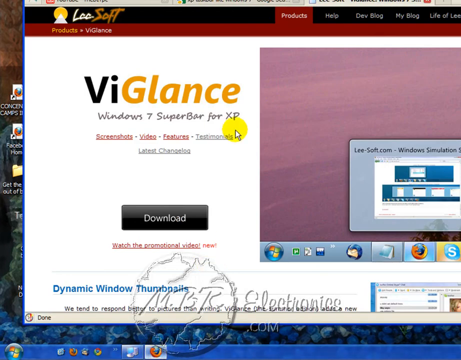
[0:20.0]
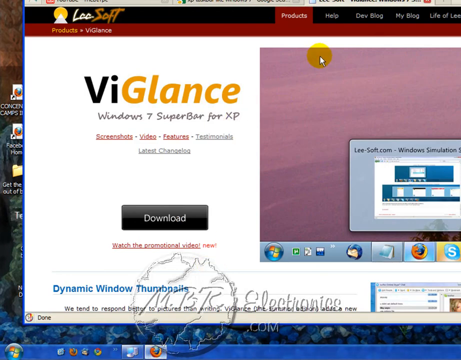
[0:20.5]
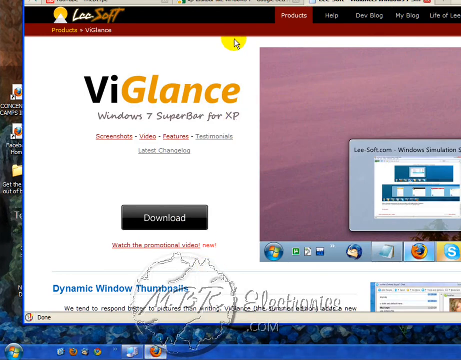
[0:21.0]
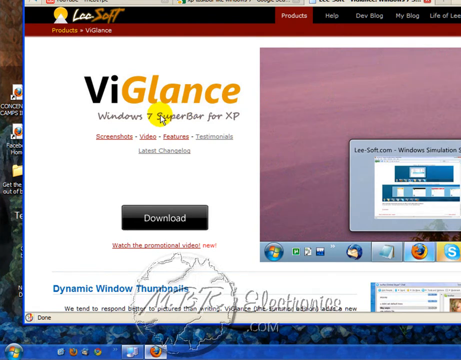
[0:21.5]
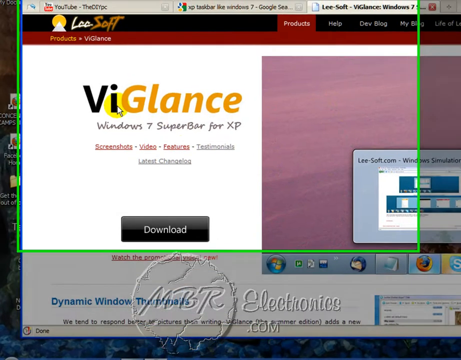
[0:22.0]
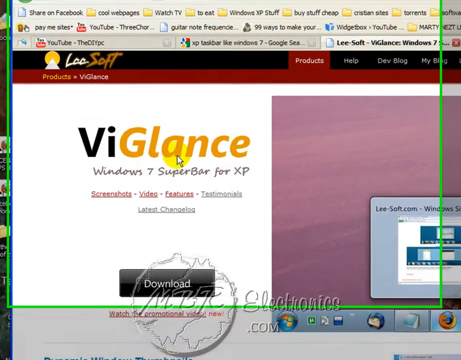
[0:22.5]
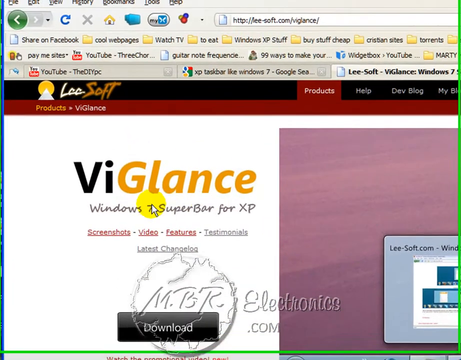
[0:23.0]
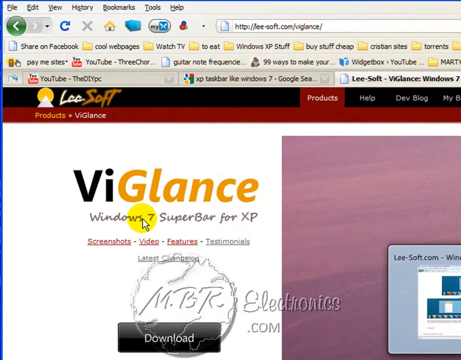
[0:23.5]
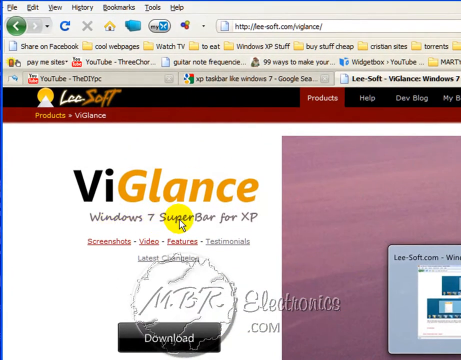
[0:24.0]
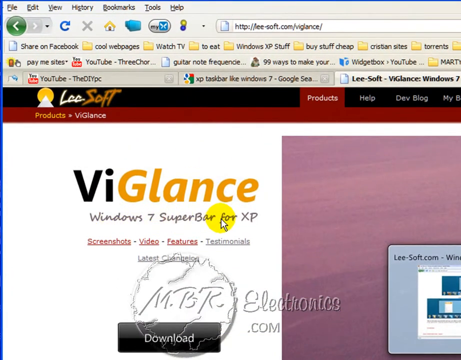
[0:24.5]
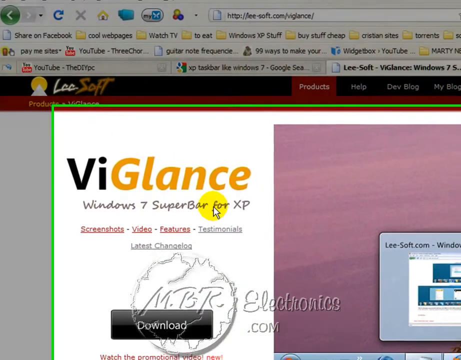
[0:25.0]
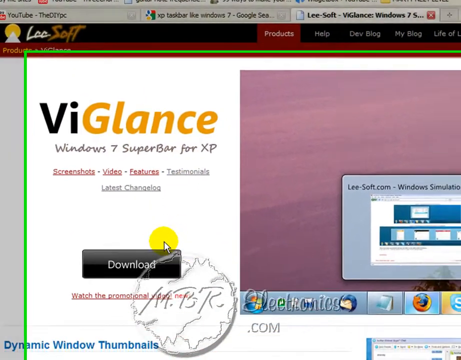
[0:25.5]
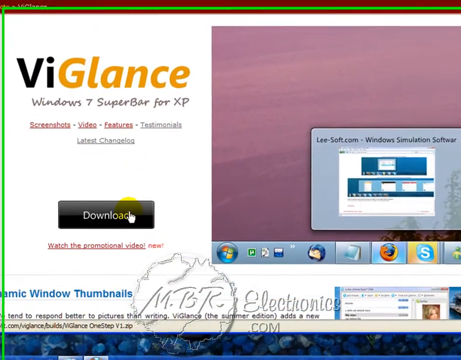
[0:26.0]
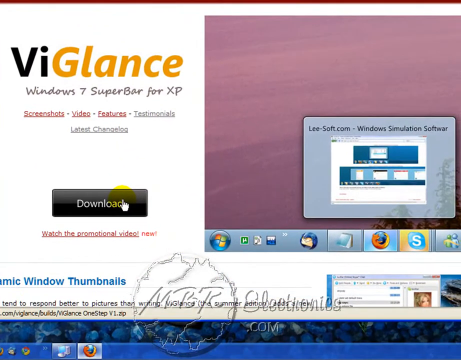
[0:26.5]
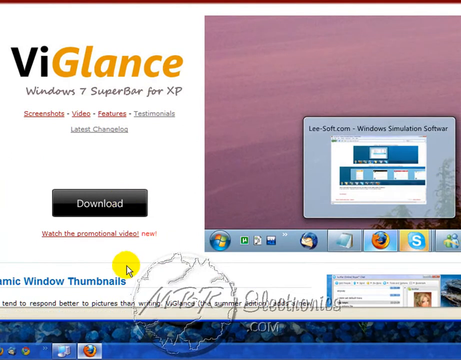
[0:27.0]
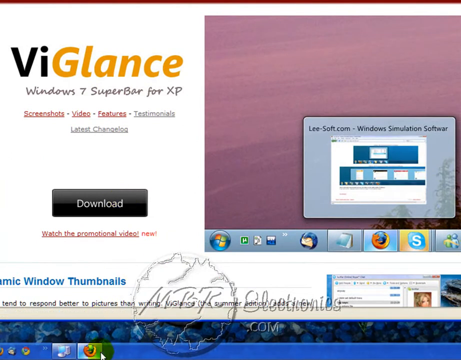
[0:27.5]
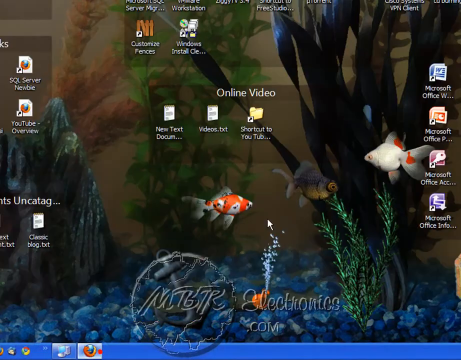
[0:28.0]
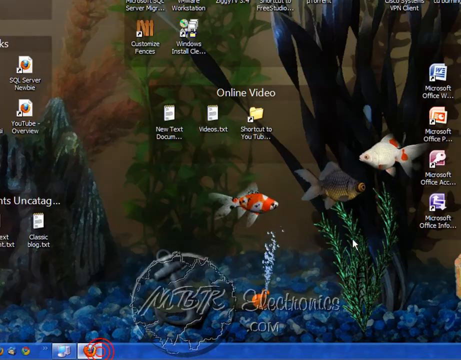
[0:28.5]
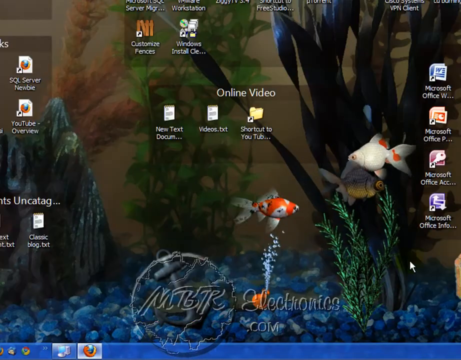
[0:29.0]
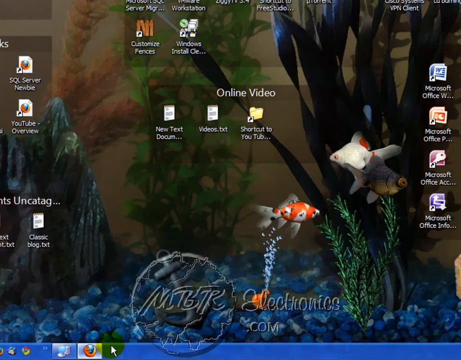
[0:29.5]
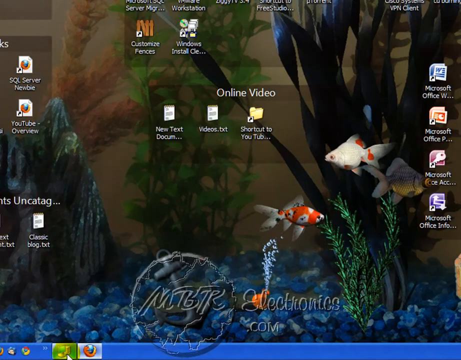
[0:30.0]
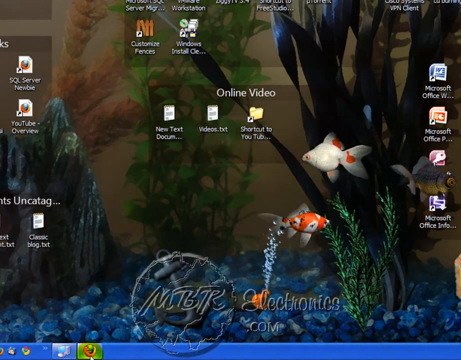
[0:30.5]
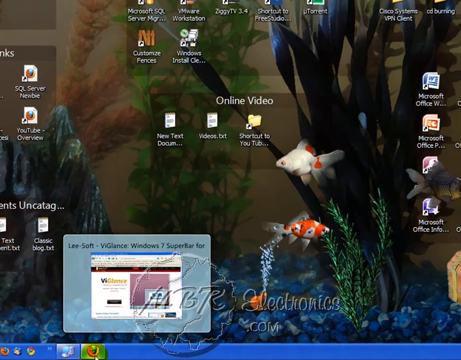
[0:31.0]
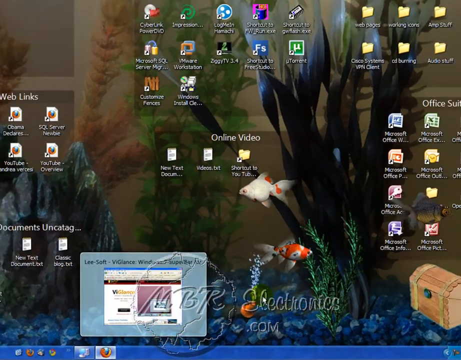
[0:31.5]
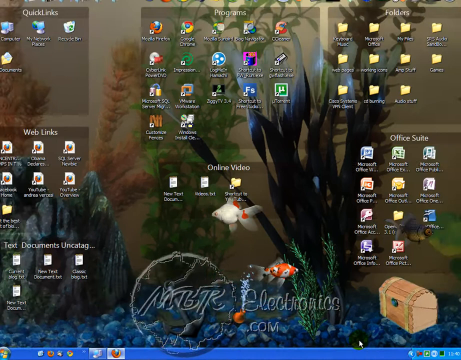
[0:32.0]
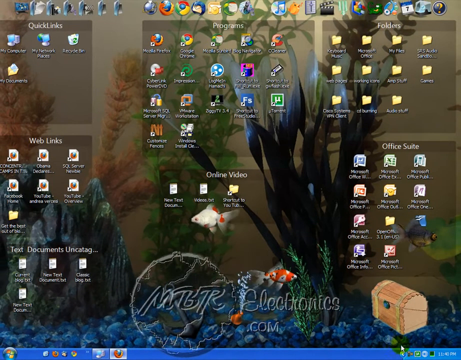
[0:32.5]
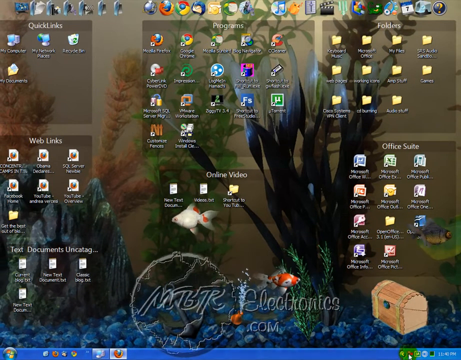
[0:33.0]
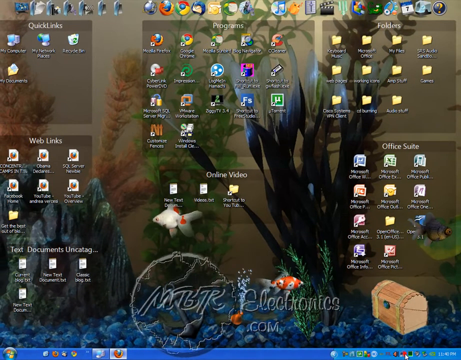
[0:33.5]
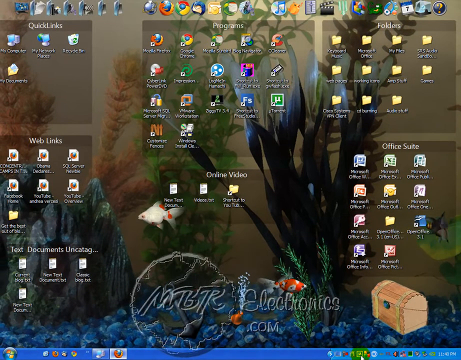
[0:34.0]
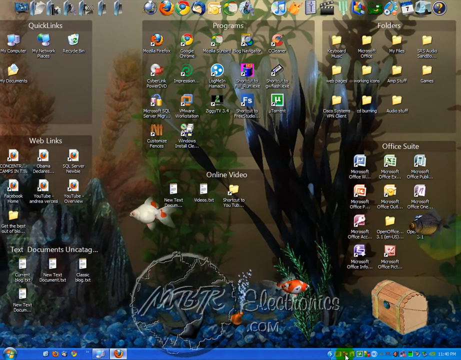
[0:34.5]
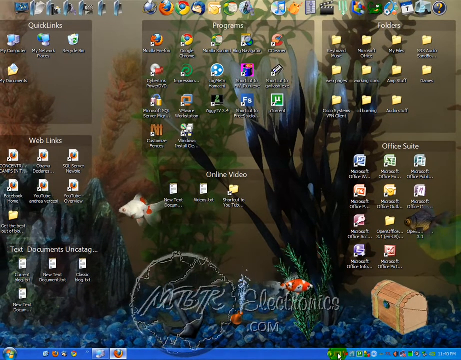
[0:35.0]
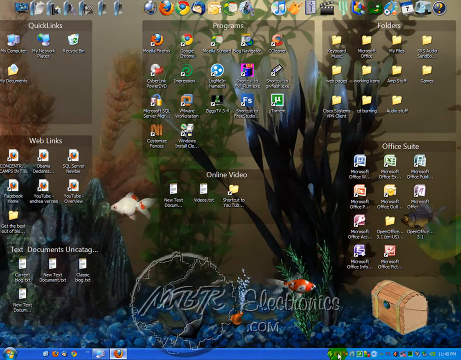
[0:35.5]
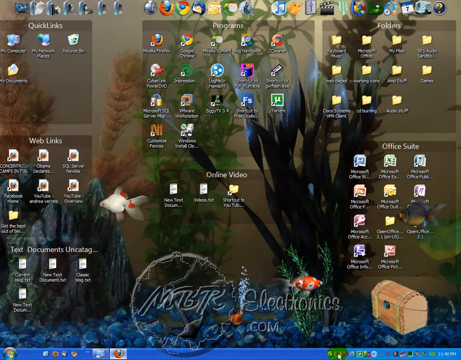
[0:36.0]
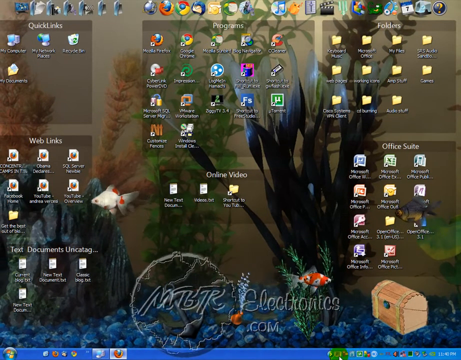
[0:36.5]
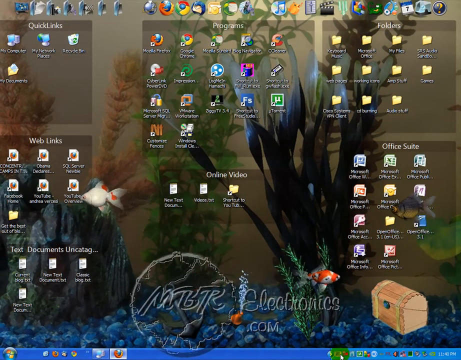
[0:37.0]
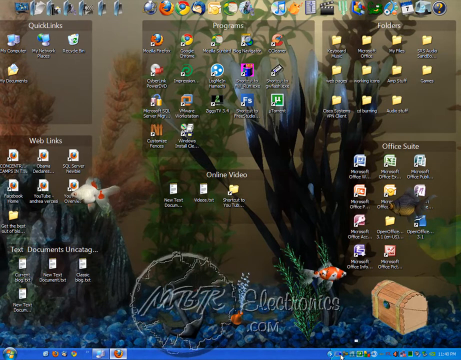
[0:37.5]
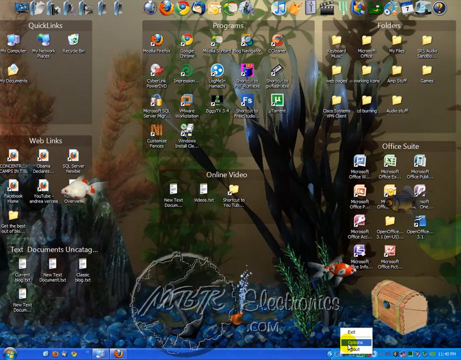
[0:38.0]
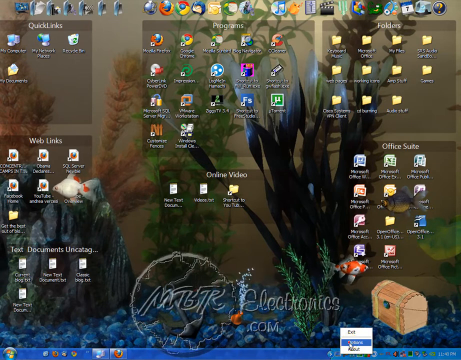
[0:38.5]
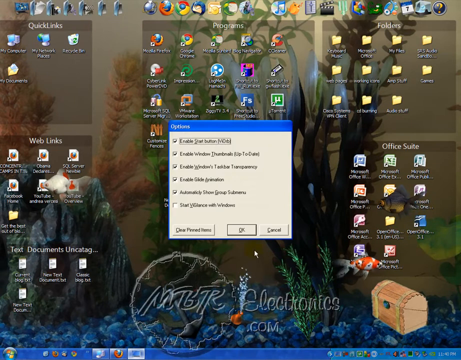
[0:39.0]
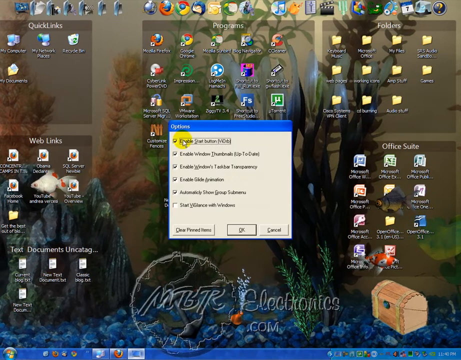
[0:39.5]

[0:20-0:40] The user continues to navigate through the icons and is about to download something. He navigates to the wallpaper screen, where moving fish of different colors appear: one is white and orange, another is brown, and another is orange. He then navigates back to the window where he is downloading Windows 7 super bar for XP. More than 20 icons appear on the screen, including folders of uncategorized text documents, folders of online videos, and folders of office suites and programs, and many icons are pinned on the screen. The video quality is very low, so some words are not legible.